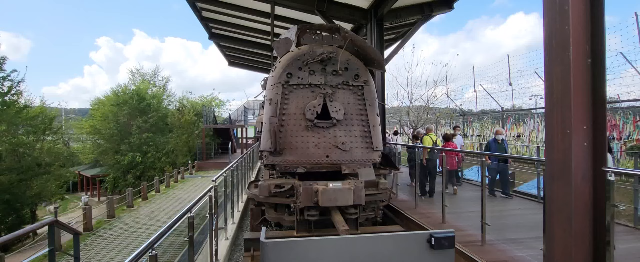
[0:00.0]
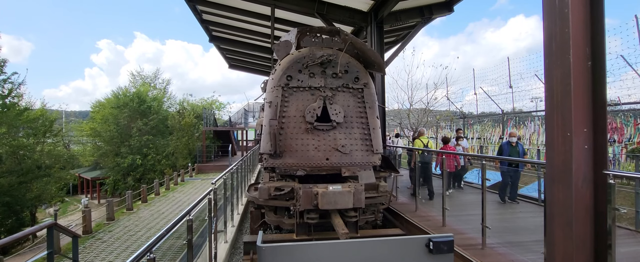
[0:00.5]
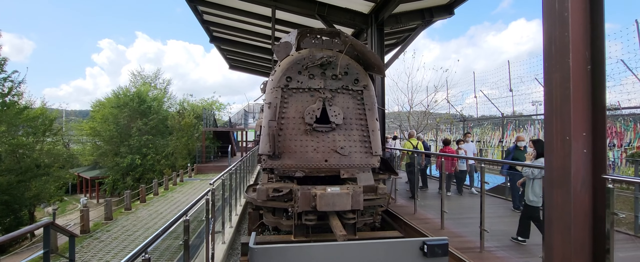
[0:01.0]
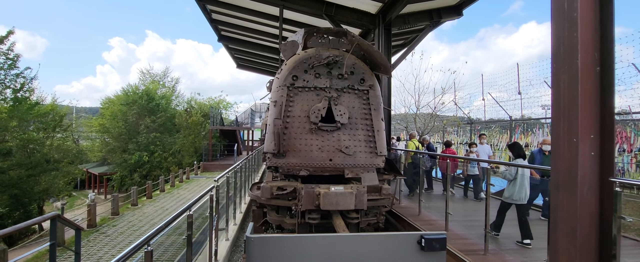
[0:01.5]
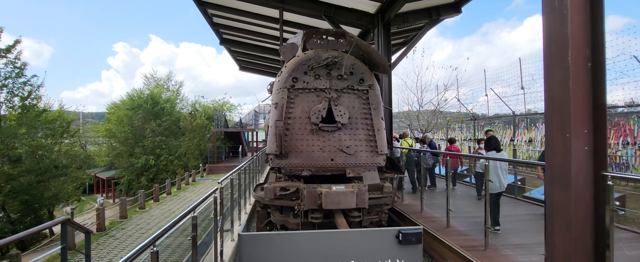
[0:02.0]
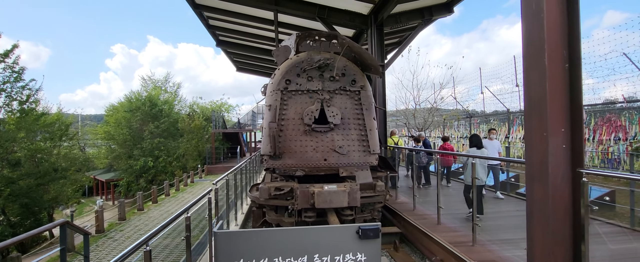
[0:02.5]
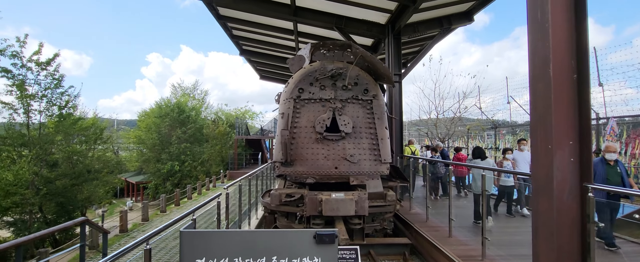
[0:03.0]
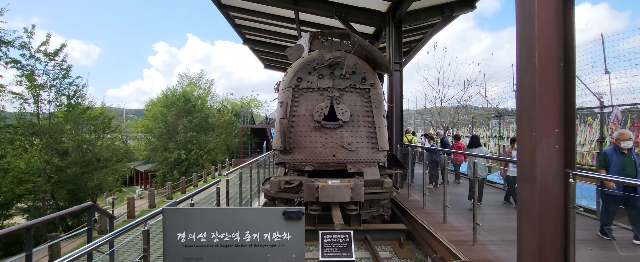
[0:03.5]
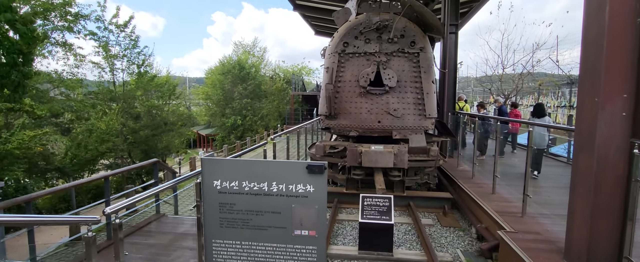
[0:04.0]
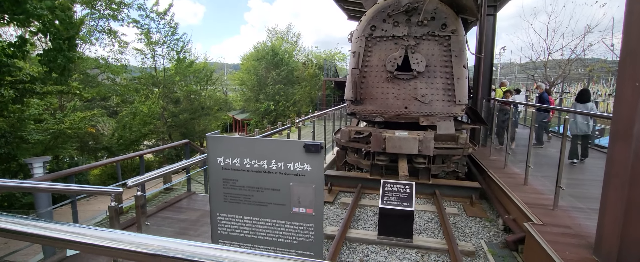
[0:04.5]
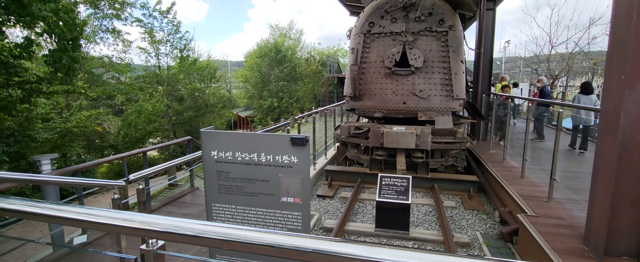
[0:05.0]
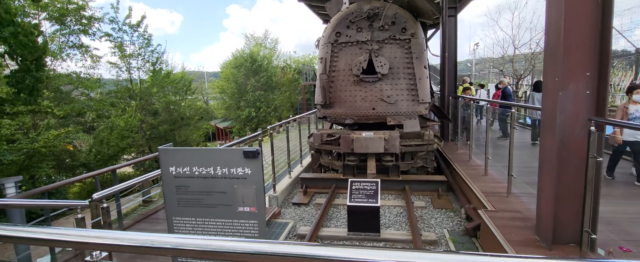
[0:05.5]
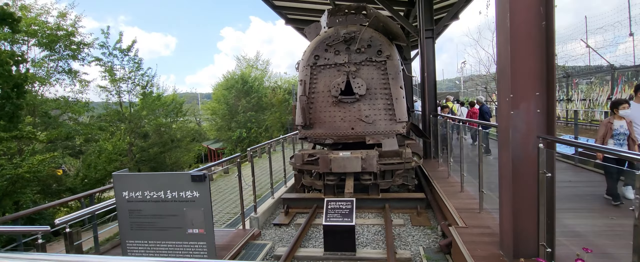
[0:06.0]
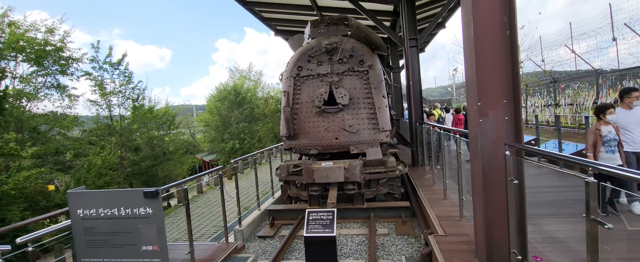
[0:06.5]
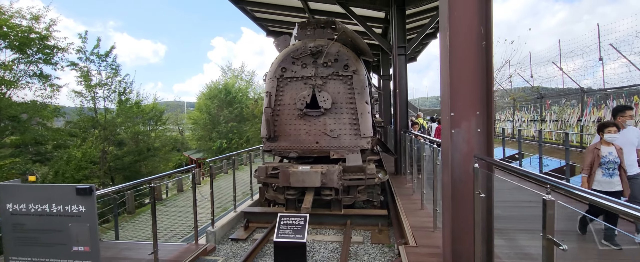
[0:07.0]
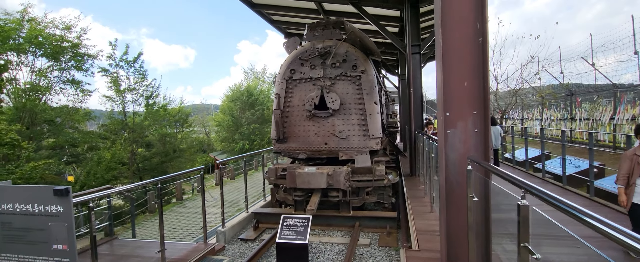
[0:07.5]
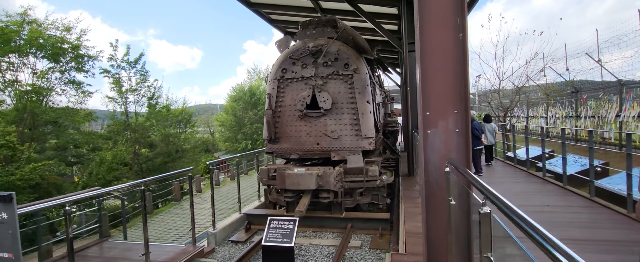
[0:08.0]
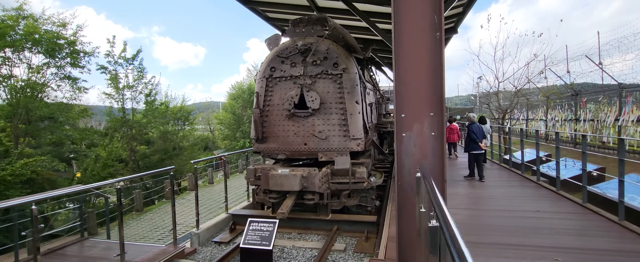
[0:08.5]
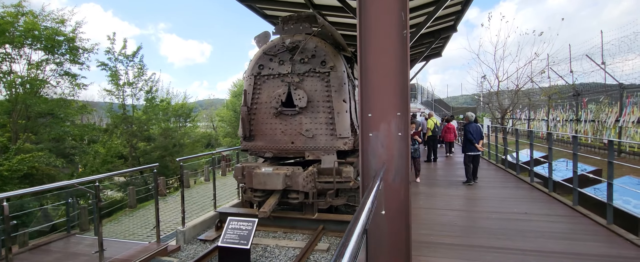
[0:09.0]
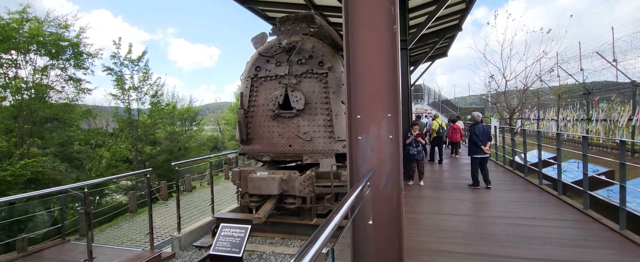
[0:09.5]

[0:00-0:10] What looks to be a train preserved in some type of memorial is displayed. The train looks old, rusty and decommissioned. The camera zooms out, revealing some type of informational picture on it, which looks to be written in Japanese. To the left of the train there appear to be tall green trees. In the background the sun is out, and there are many clouds. A lot of people are walking around and taking pictures of the train, which is stationed in this area for people to view.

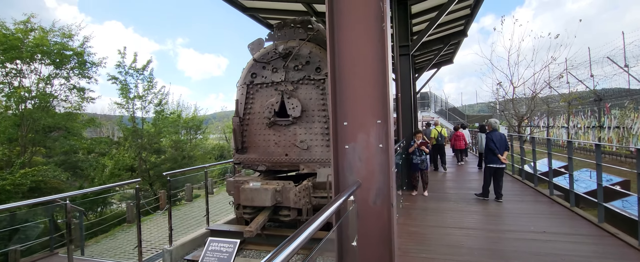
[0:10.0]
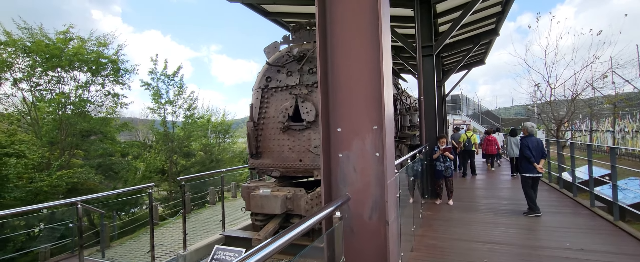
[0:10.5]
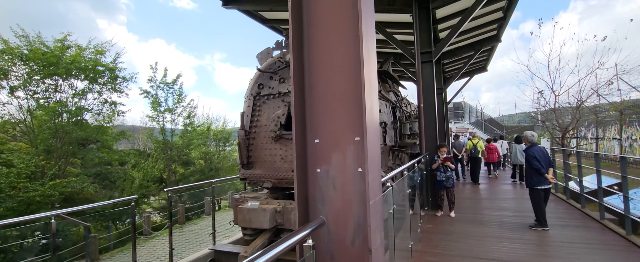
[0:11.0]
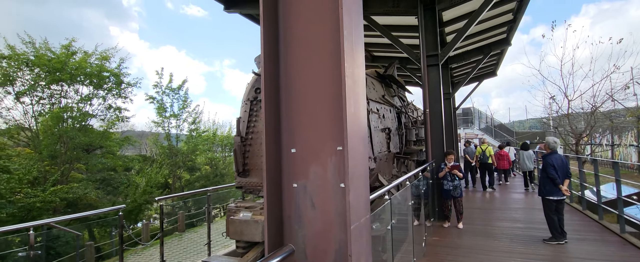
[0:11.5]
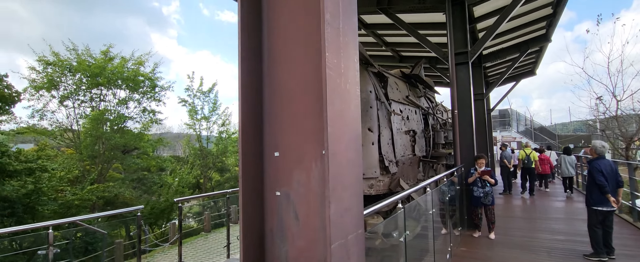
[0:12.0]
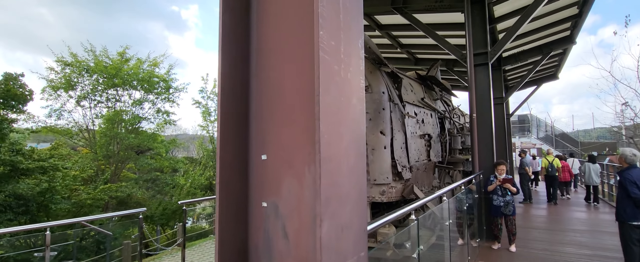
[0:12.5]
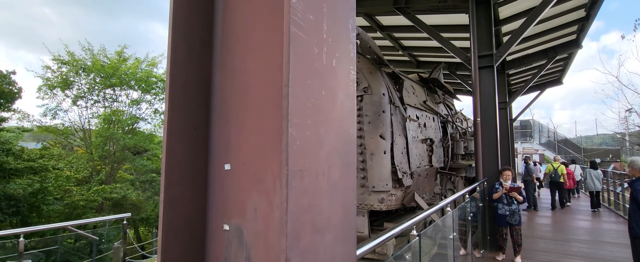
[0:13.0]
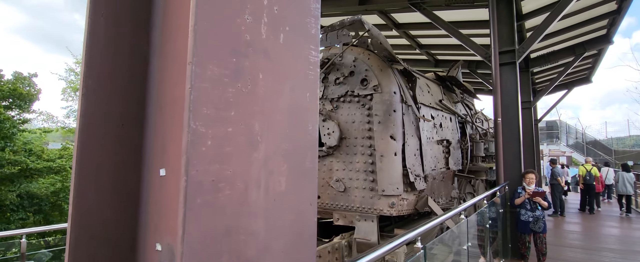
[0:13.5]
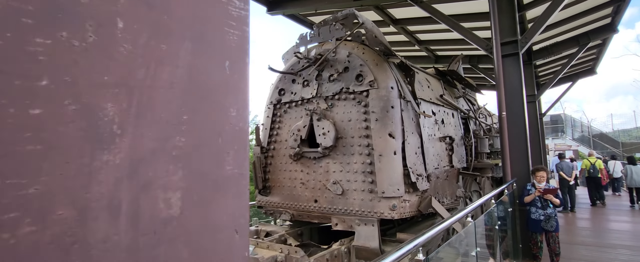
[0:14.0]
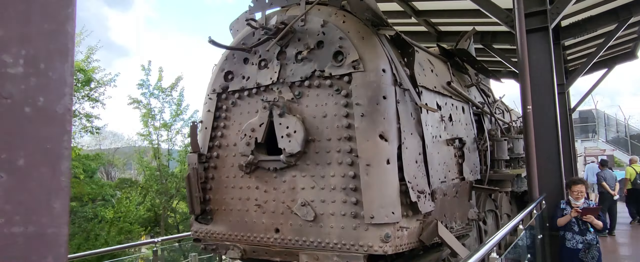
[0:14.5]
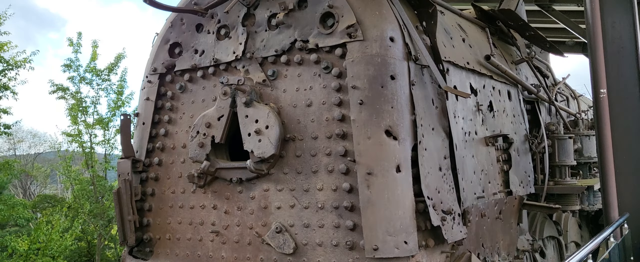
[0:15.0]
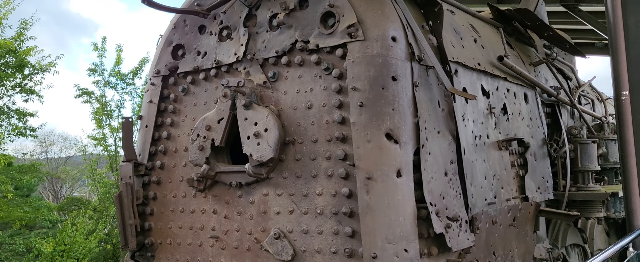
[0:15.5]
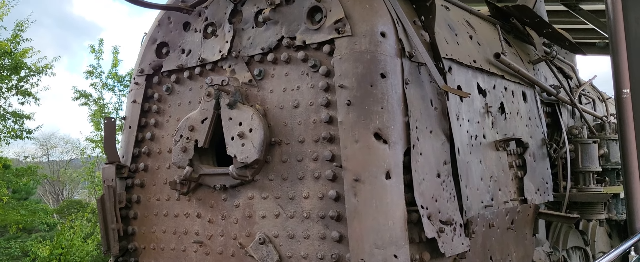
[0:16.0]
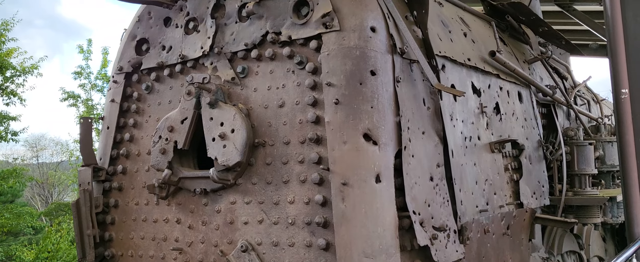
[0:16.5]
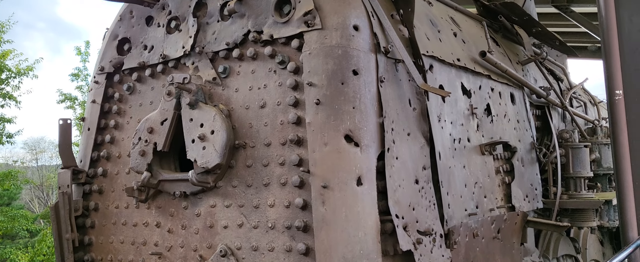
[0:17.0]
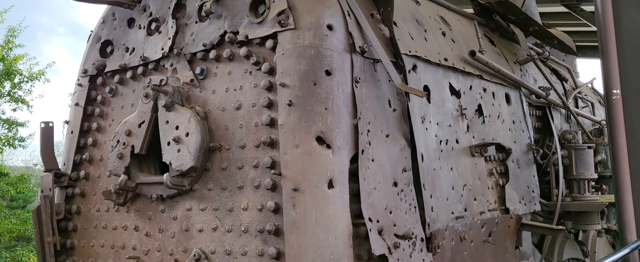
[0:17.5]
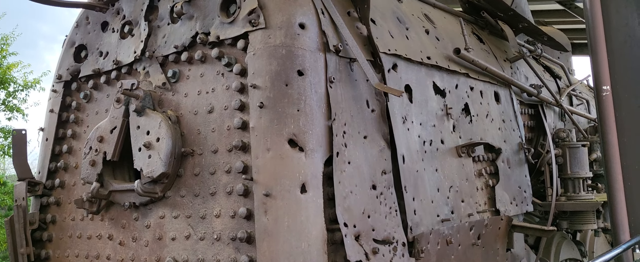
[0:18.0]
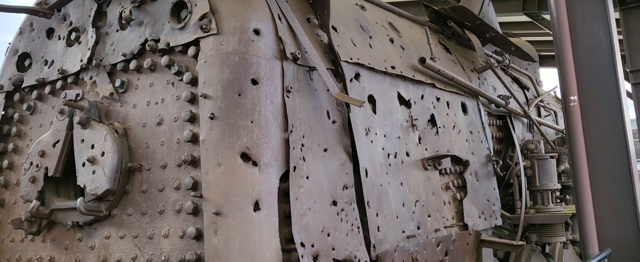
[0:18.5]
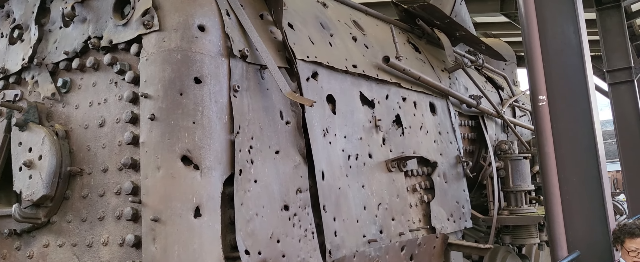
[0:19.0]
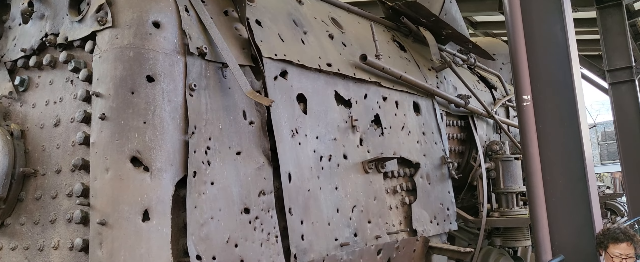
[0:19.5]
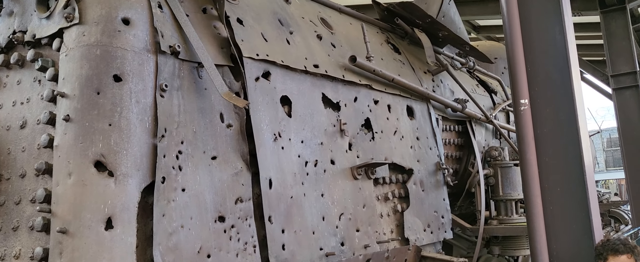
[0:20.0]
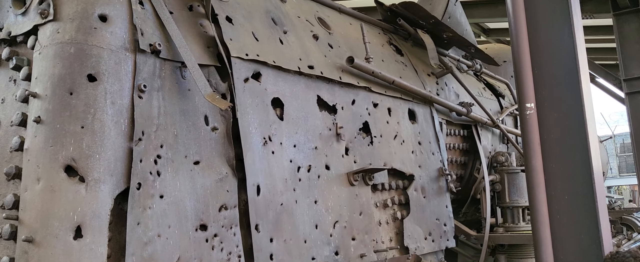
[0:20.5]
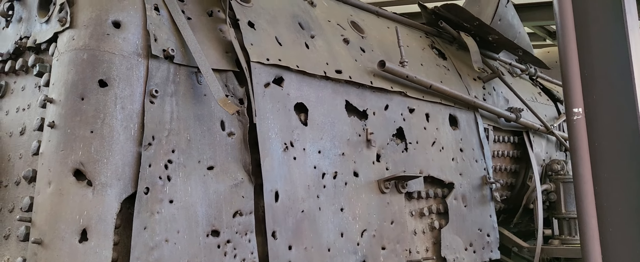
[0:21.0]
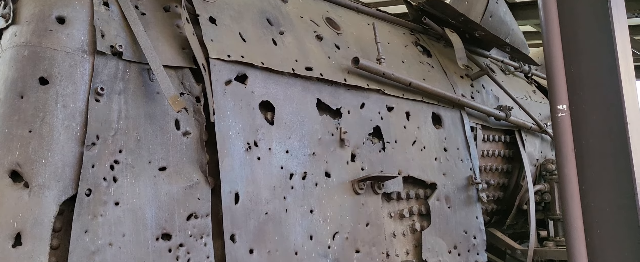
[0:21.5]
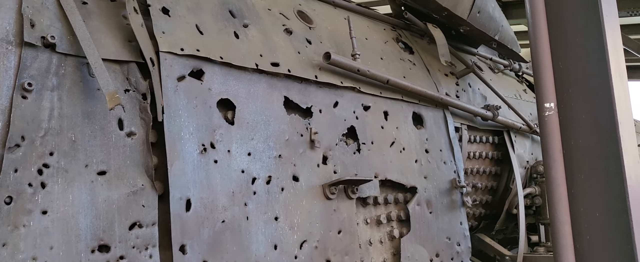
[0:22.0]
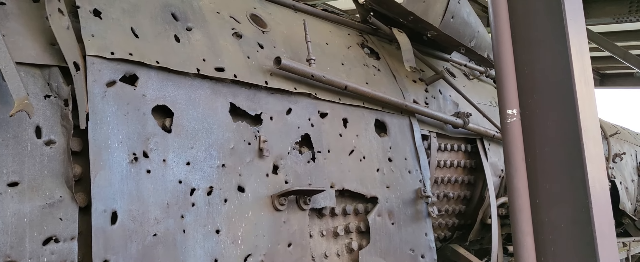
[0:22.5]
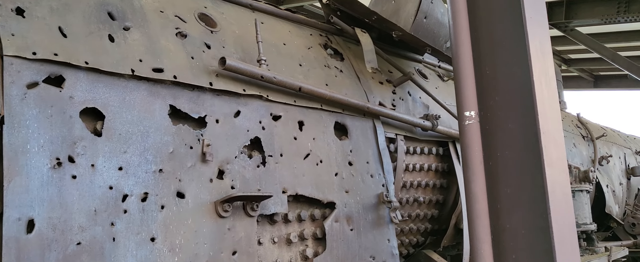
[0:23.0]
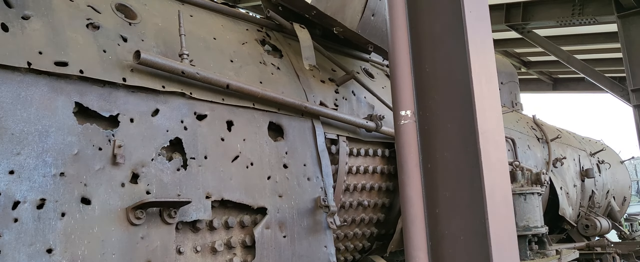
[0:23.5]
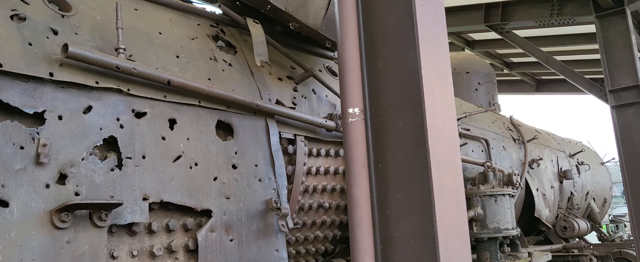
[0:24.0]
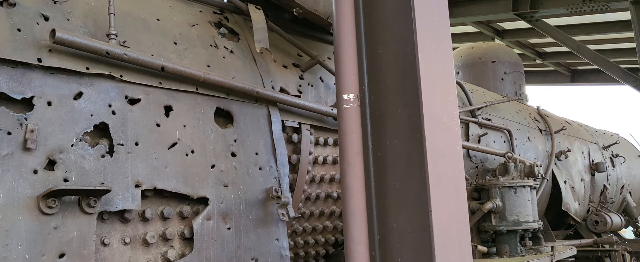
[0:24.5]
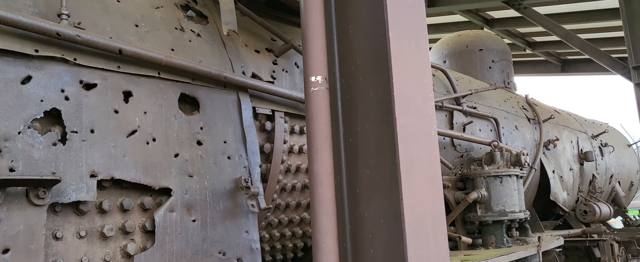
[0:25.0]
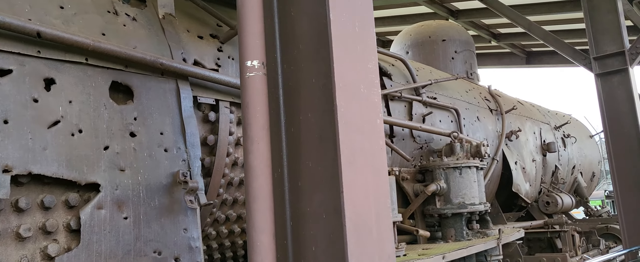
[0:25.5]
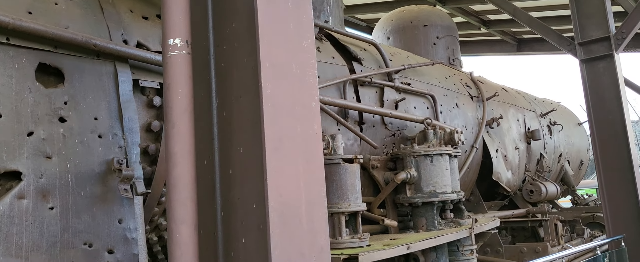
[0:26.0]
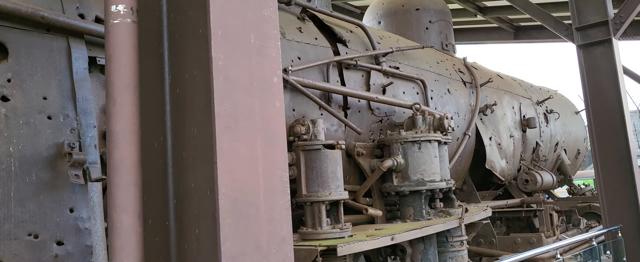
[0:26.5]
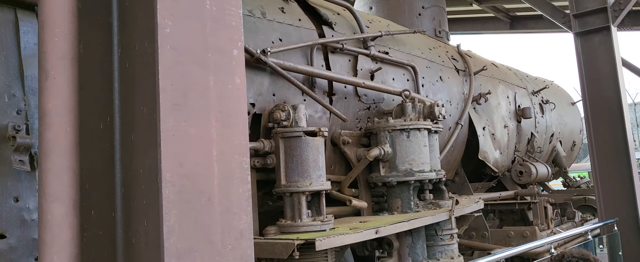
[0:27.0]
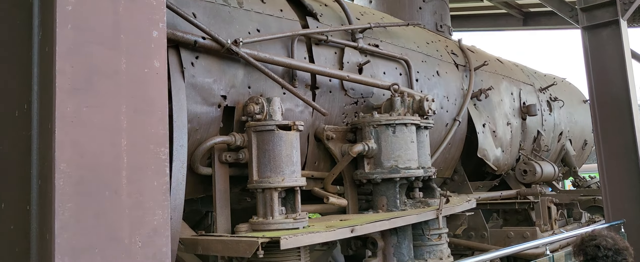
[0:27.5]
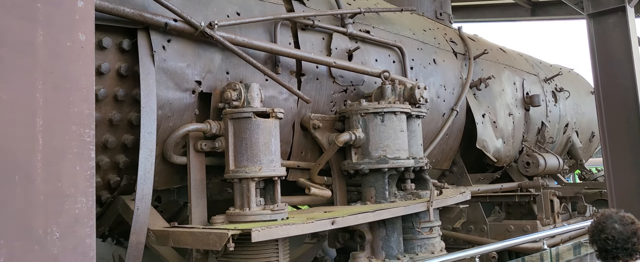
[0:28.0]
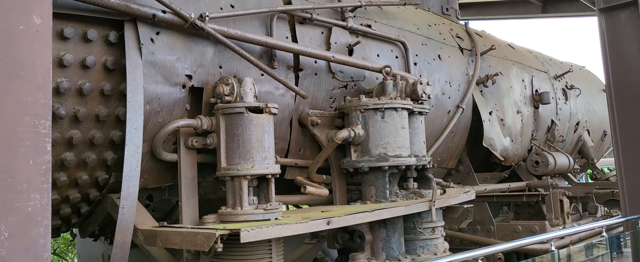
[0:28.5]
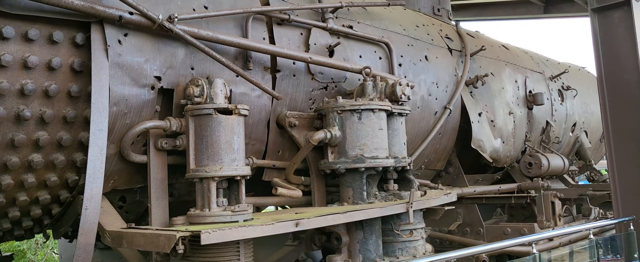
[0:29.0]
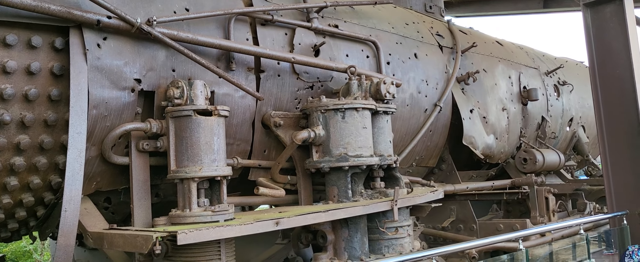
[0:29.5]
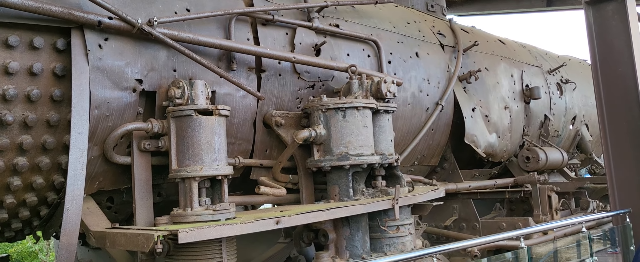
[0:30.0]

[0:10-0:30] The camera person walks closer to and around the massive train, which is brown and destroyed. It looks heavily damaged, and the camera zooms in on the right side of the train, showing its mechanics and engineering where there is massive damage, with gashes all over the train. As the camera person walks toward the train, a person using an iPad looks up at the camera, then looks back down at the iPad and continues using it. The camera is closely zoomed in on the train, showing that there are many piercings in it as well. A person with grey hair is standing at the side with their hands behind their back, walking, as 7 or 8 others walk away from the train toward some other type of exhibit.